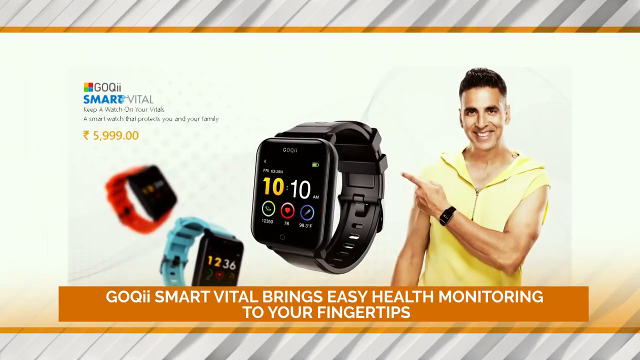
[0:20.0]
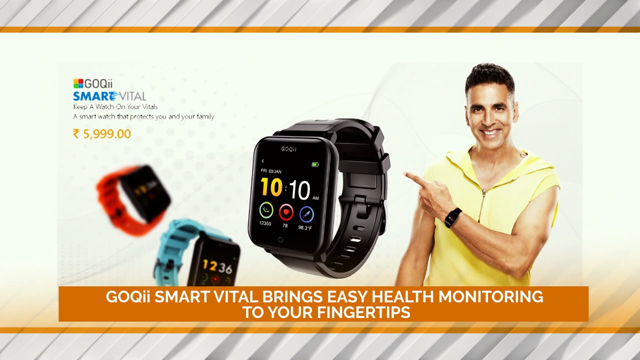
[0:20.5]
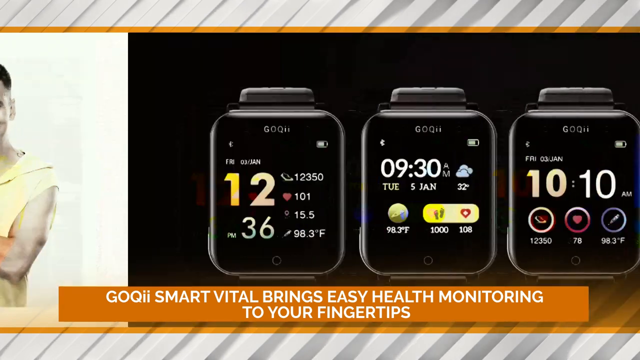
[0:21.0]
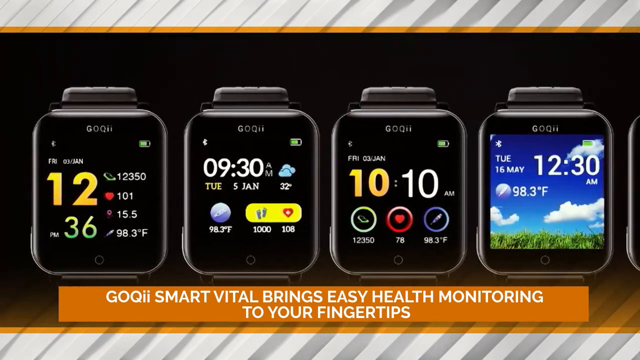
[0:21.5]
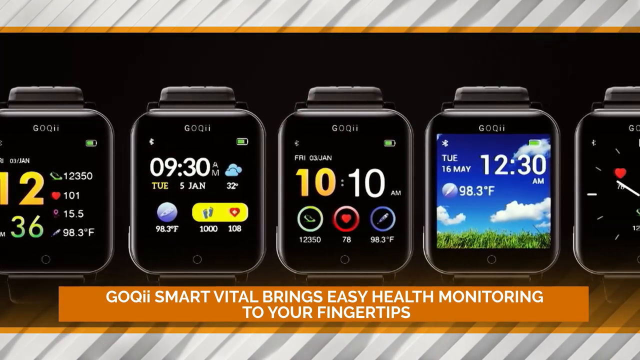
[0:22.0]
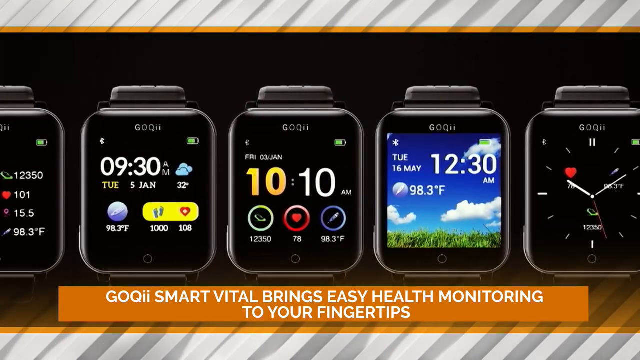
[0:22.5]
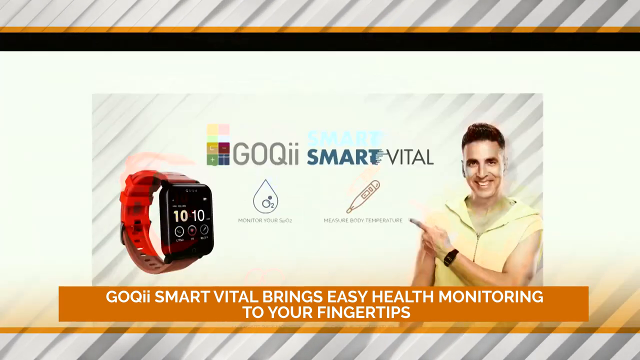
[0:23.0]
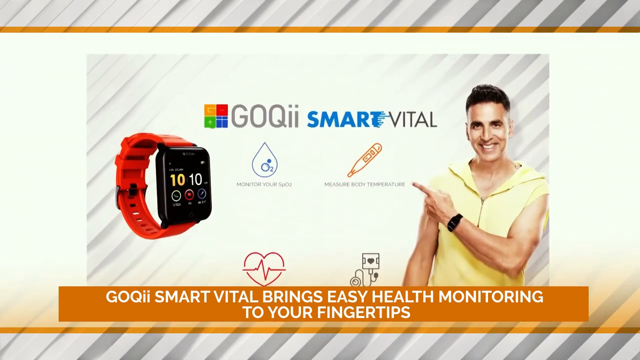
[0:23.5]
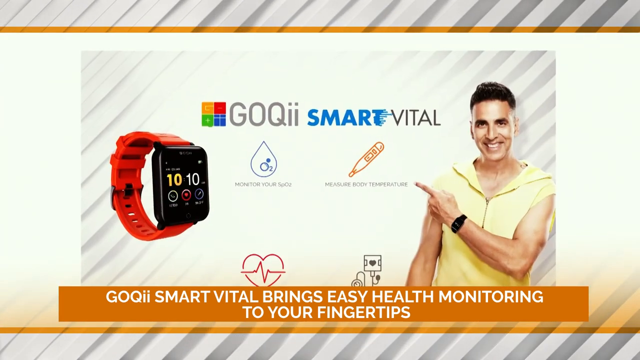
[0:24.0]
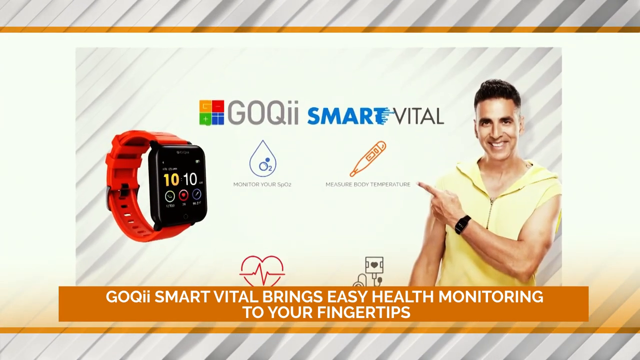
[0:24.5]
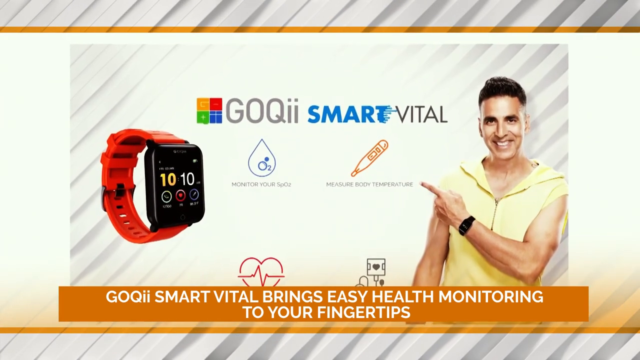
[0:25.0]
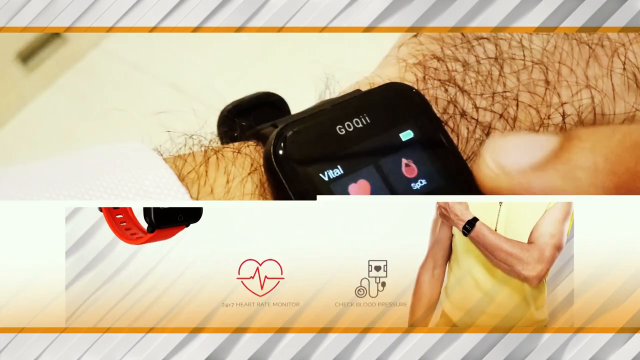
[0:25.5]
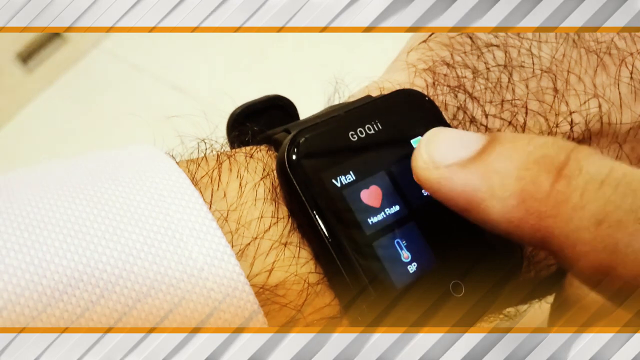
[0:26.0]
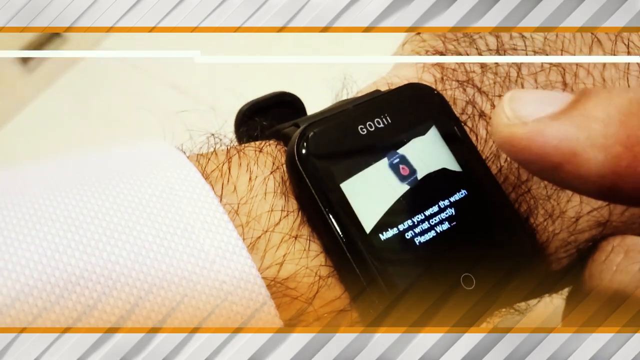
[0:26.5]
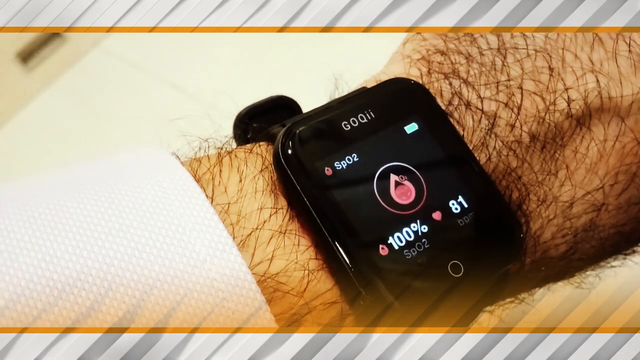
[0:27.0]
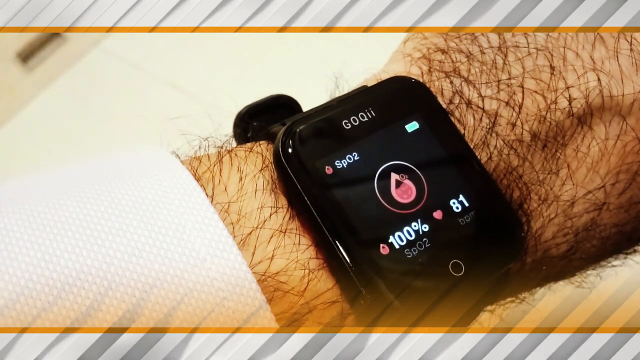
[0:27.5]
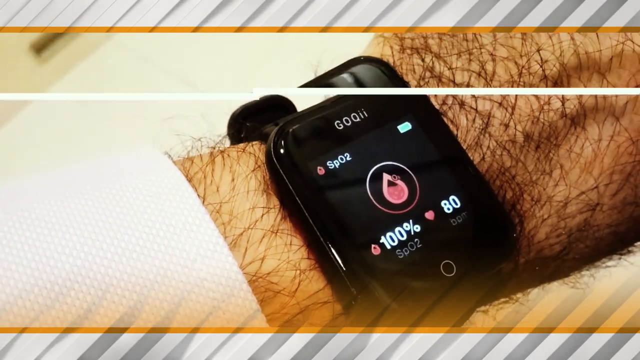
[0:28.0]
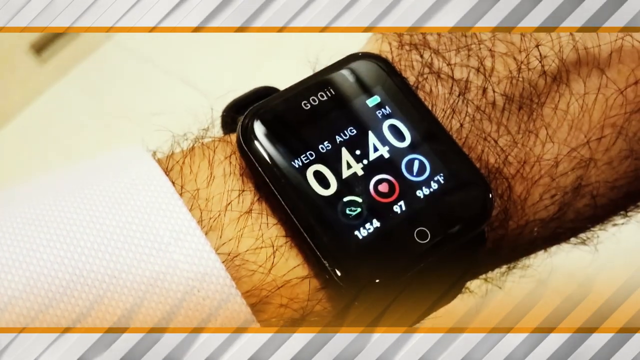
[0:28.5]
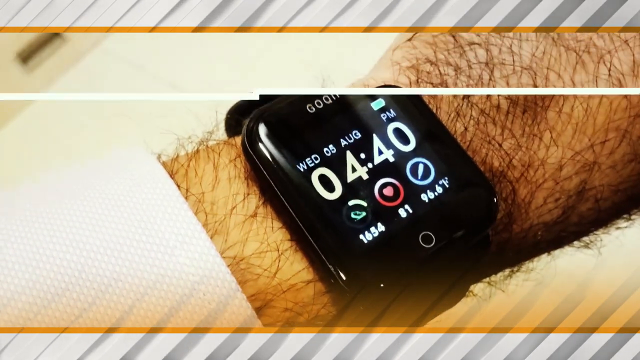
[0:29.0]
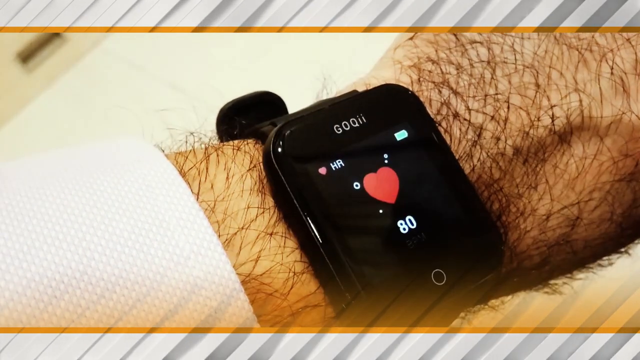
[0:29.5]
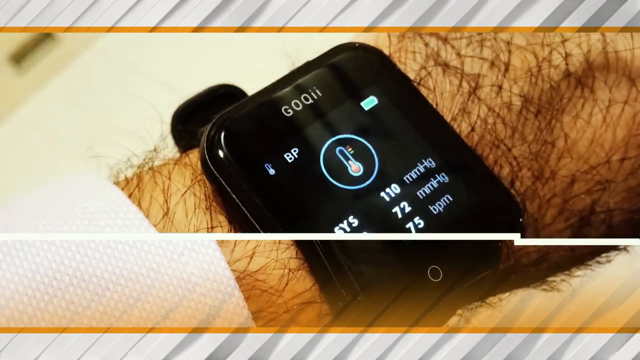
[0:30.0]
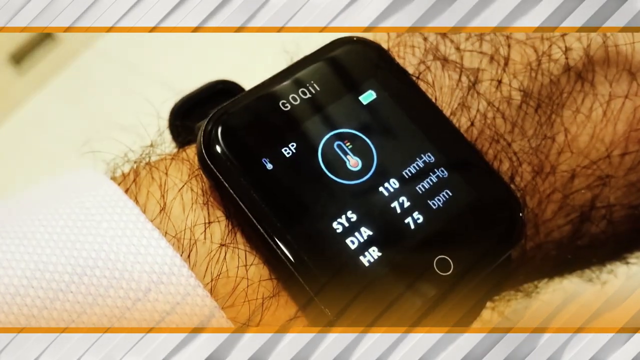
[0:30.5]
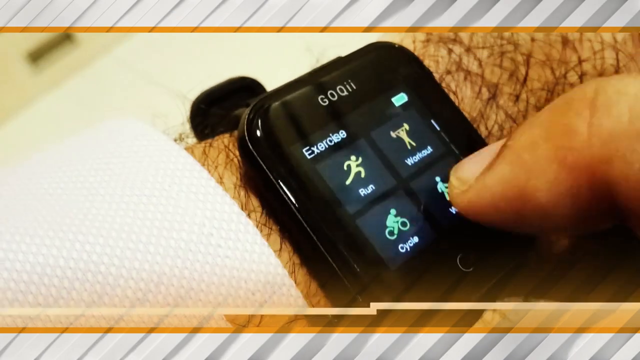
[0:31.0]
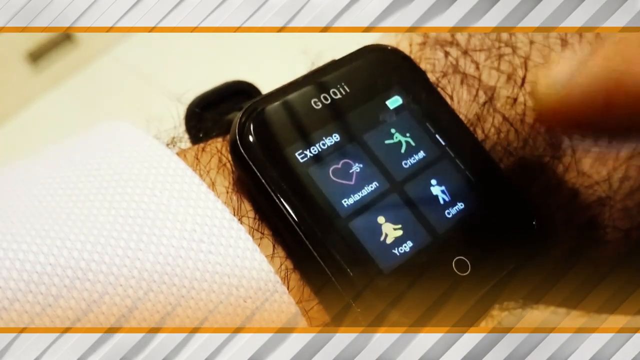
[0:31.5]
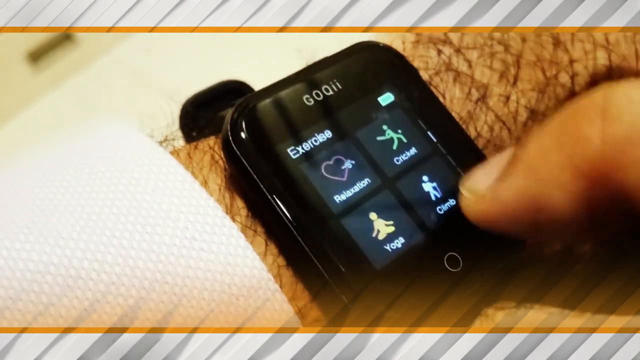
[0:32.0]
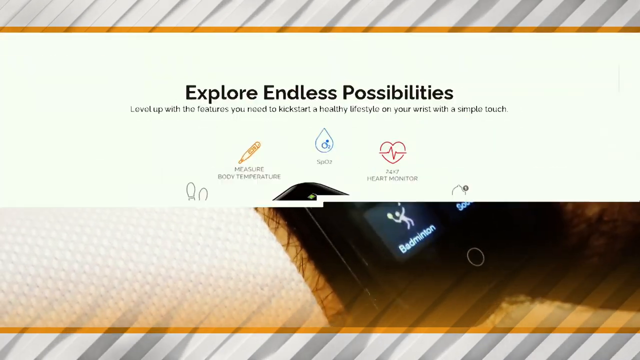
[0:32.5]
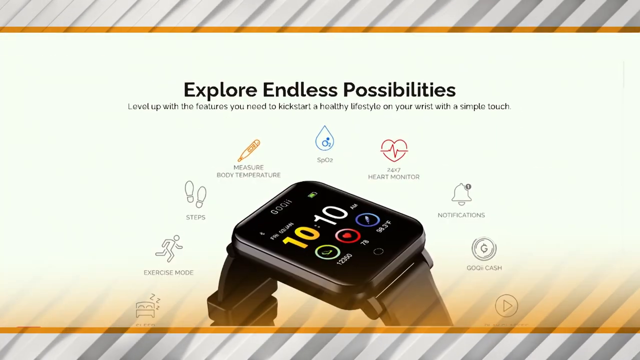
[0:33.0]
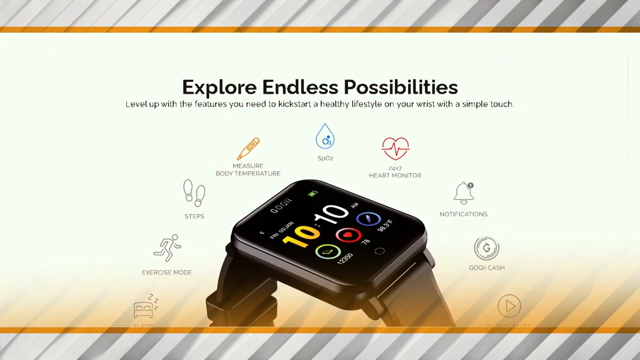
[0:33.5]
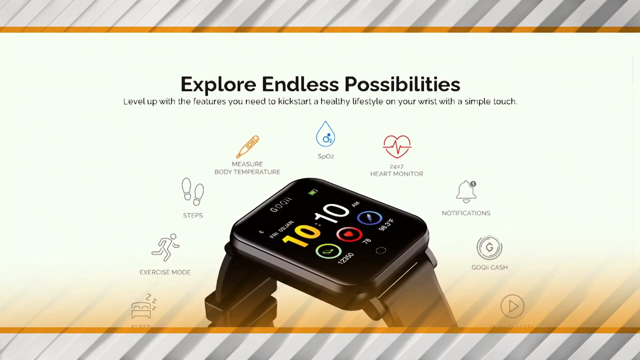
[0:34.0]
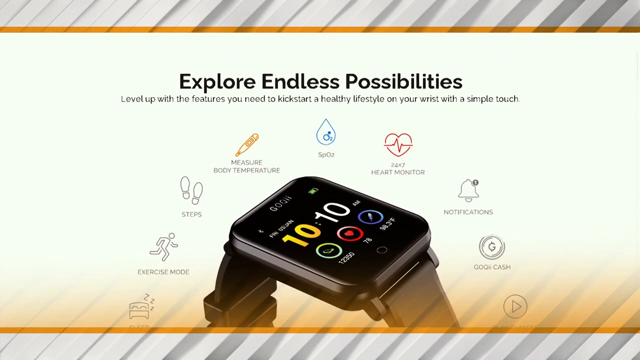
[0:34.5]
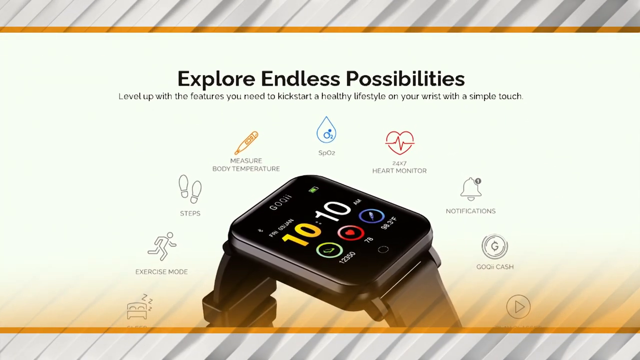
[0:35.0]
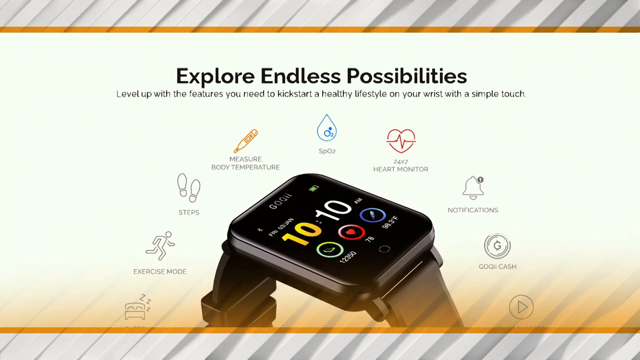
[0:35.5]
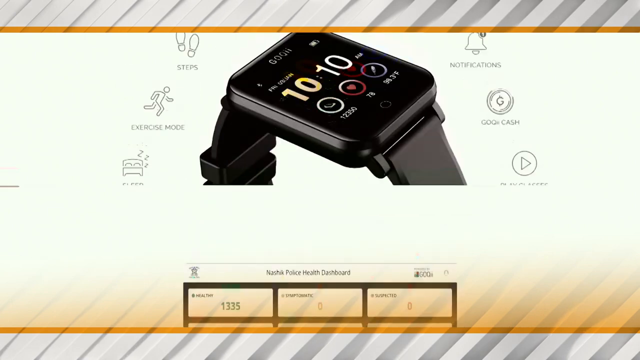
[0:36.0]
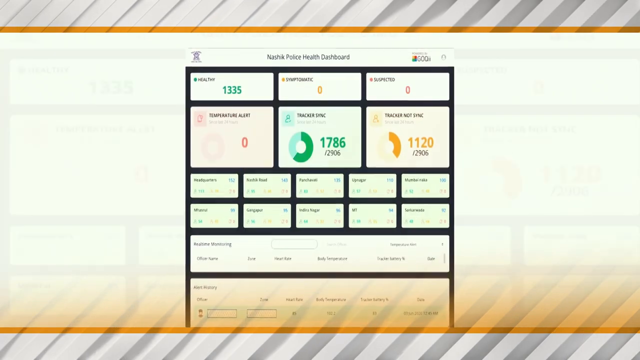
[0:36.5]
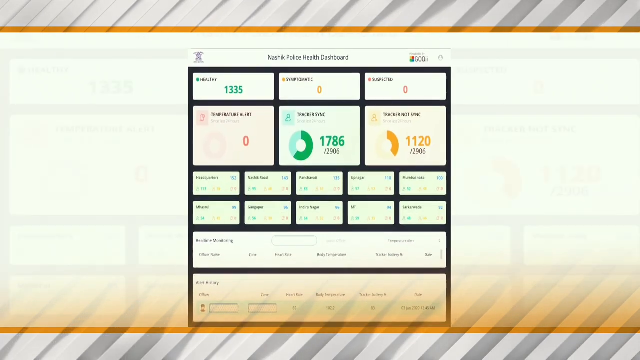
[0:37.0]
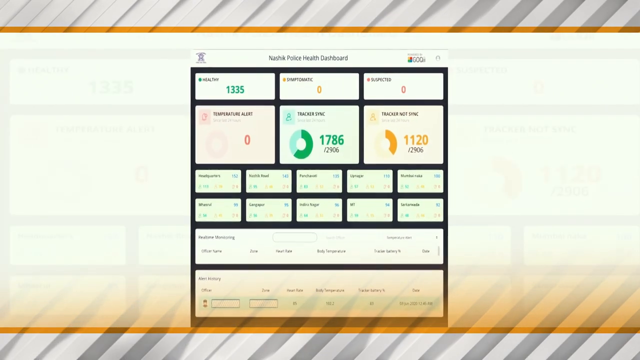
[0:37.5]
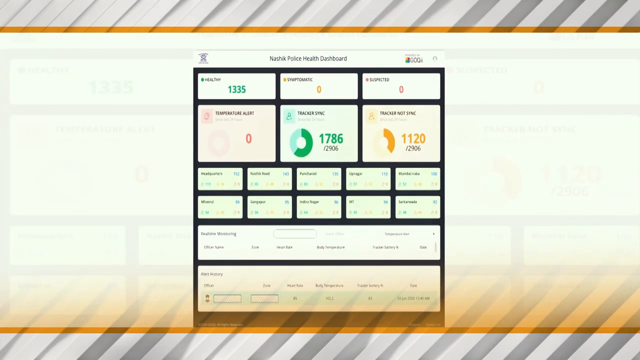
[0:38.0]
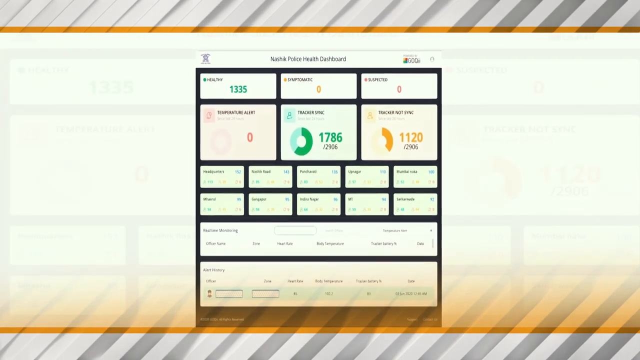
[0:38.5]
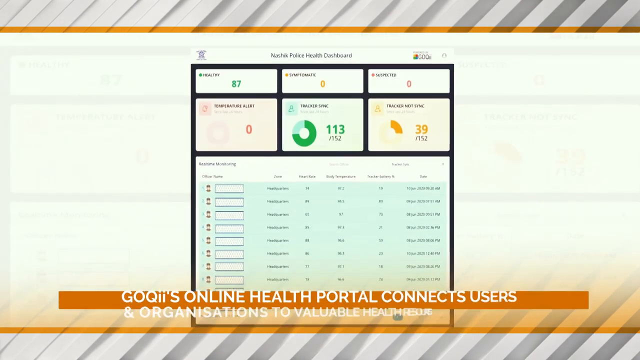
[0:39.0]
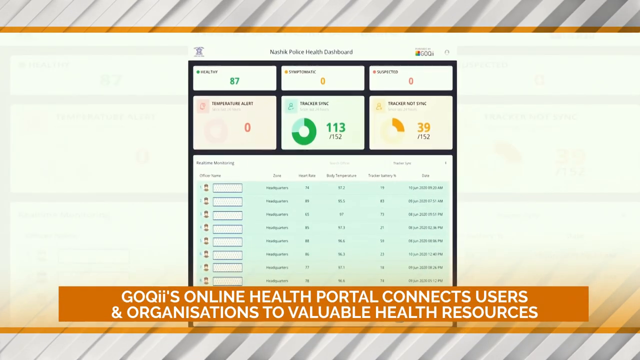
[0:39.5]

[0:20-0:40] The video is an ad. It shows a smartwatch called Smart GOQII, spelled G-O-Q-I-I, also named Vital, Smart Vital. Text describes it as for "total health monitoring" and says it brings easy health monitoring to your fingertips. Various settings appear on the watch, including a thermometer, and a man with a hairy arm wears it. The screen then shows which exercise is being done, with the text "Explore the endless possibilities," and lists features: exercise mode, steps, measure body temperature, heart monitoring, notifications and GOQII Cash. One item is unreadable.